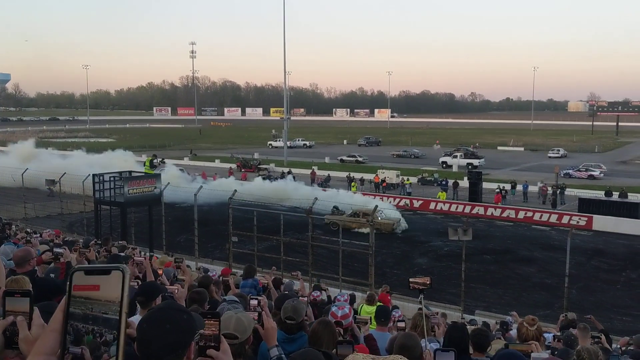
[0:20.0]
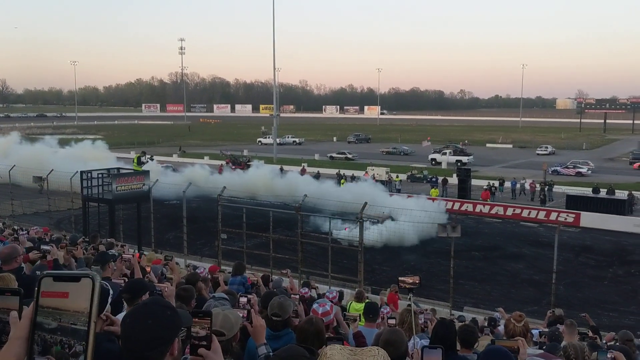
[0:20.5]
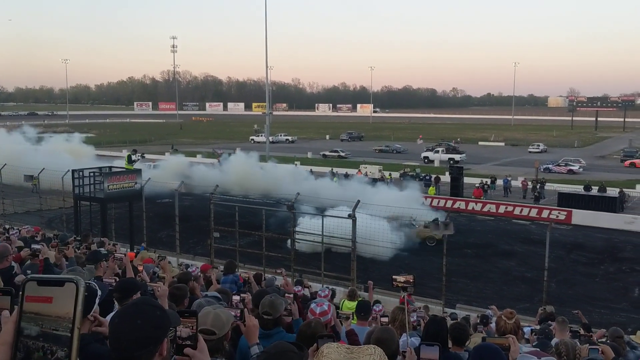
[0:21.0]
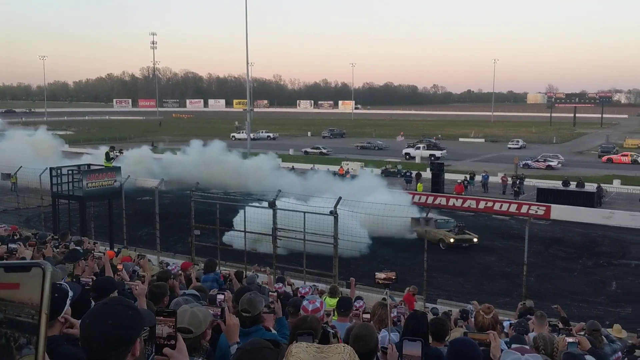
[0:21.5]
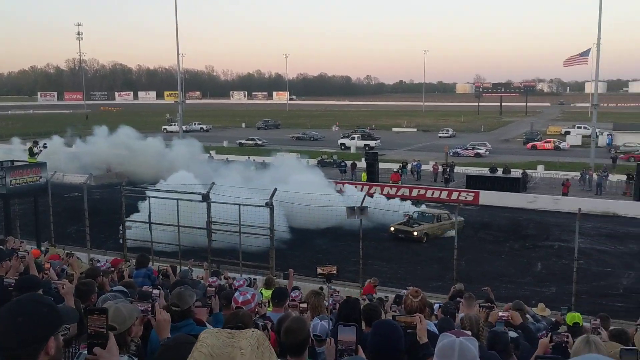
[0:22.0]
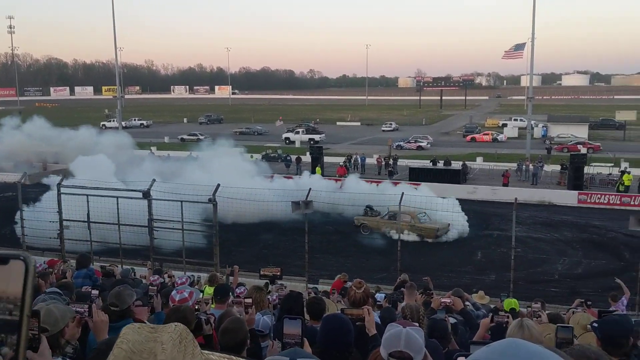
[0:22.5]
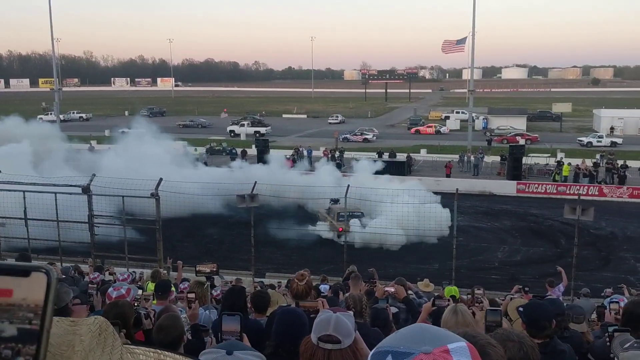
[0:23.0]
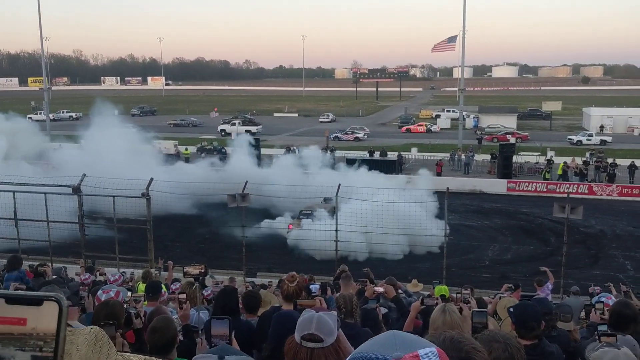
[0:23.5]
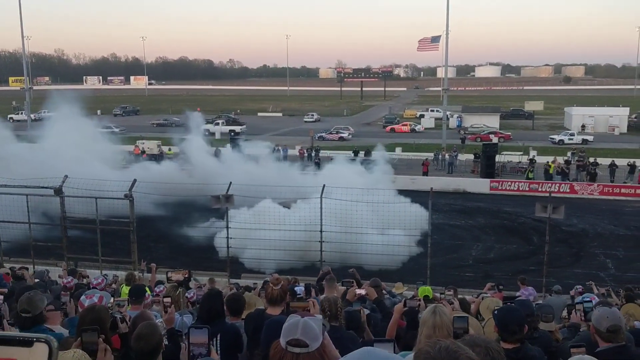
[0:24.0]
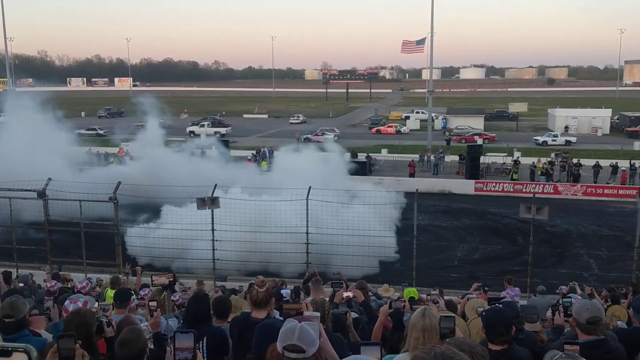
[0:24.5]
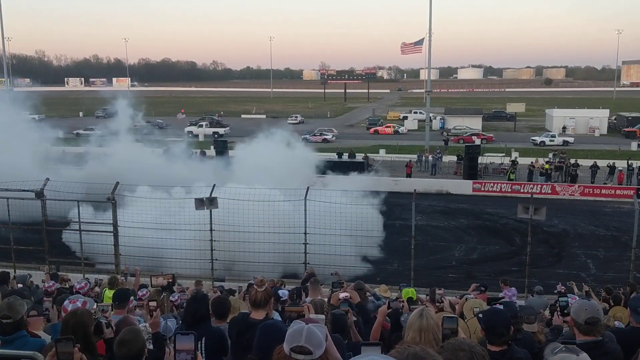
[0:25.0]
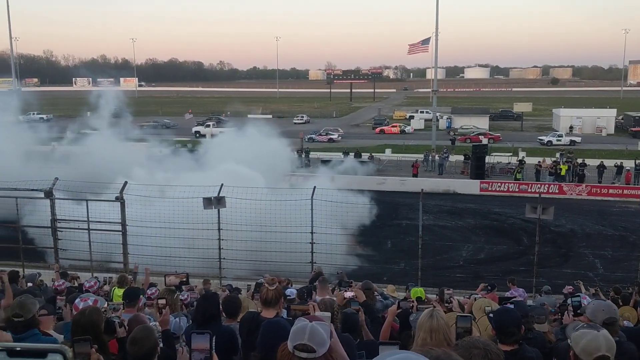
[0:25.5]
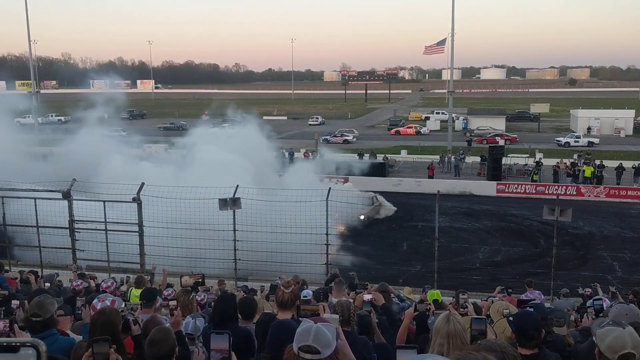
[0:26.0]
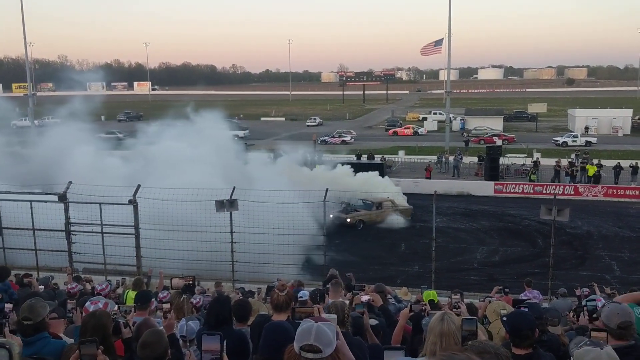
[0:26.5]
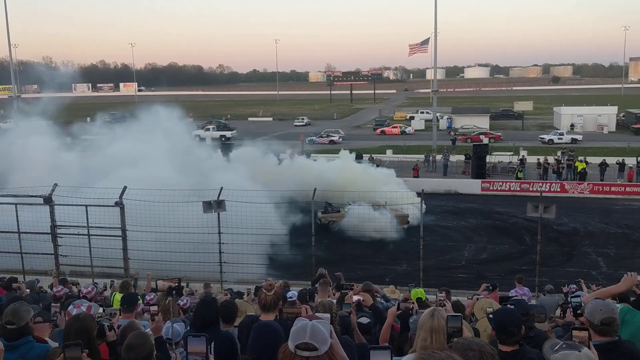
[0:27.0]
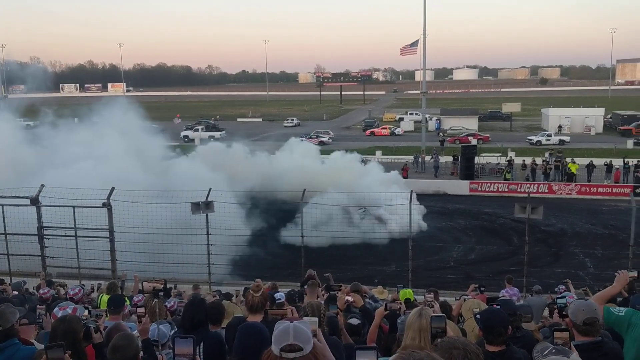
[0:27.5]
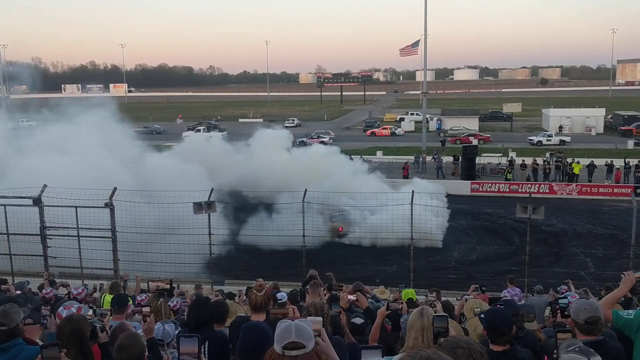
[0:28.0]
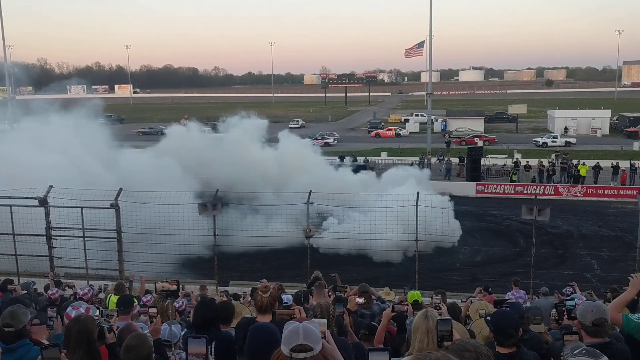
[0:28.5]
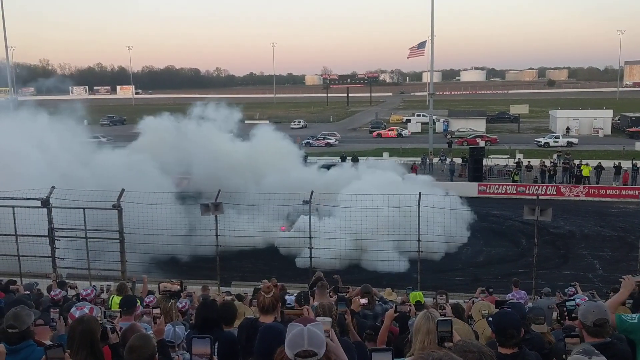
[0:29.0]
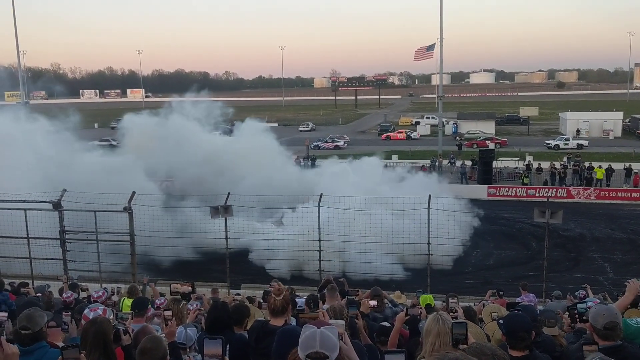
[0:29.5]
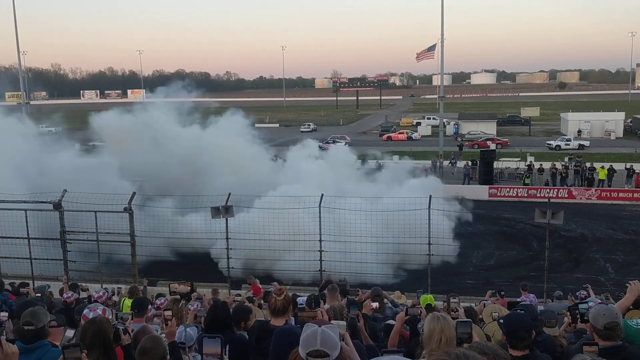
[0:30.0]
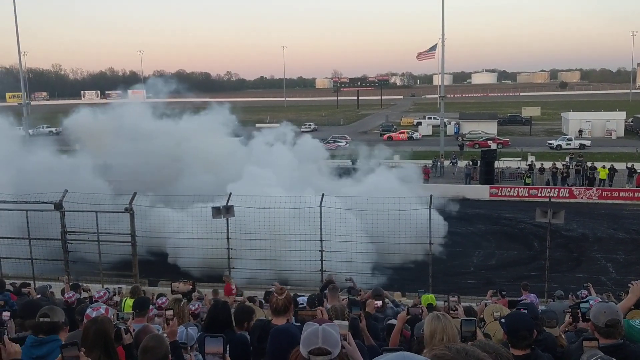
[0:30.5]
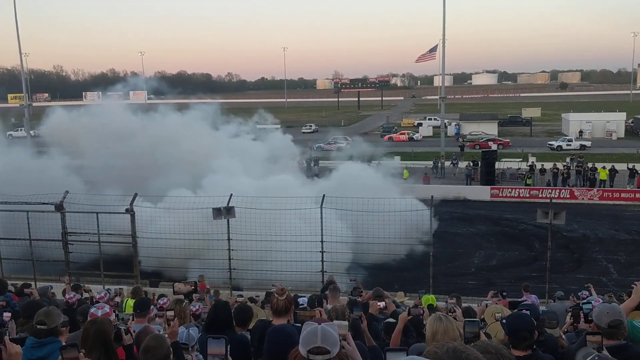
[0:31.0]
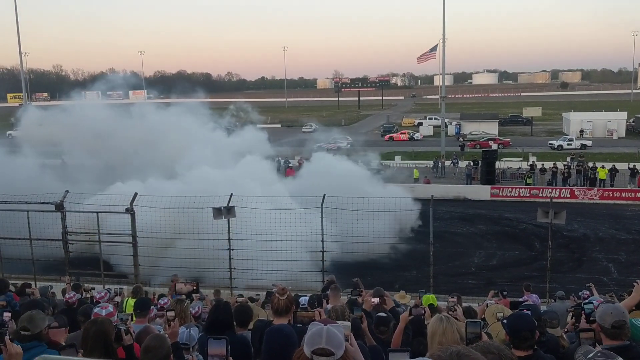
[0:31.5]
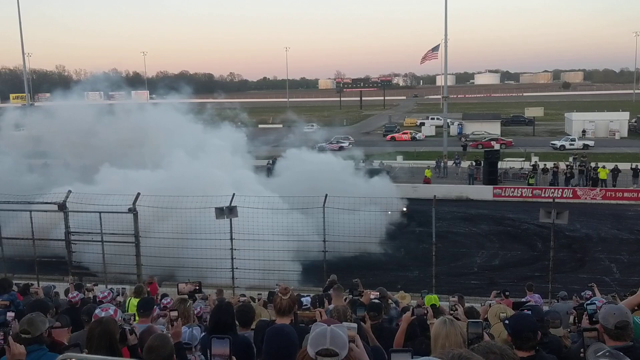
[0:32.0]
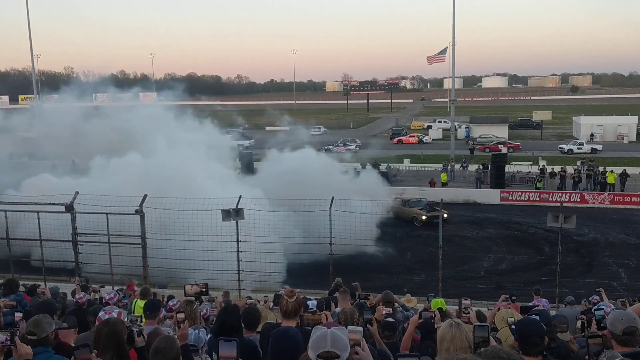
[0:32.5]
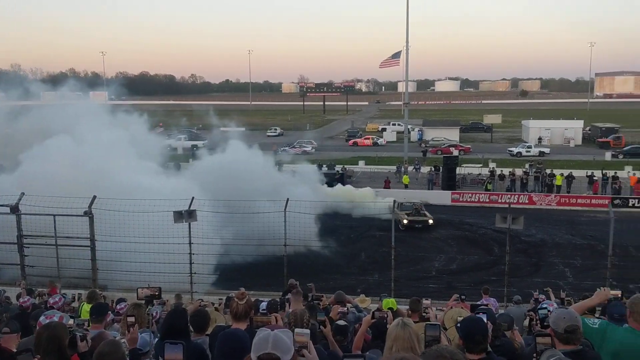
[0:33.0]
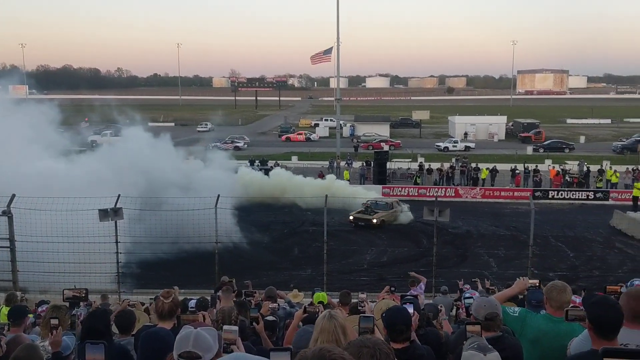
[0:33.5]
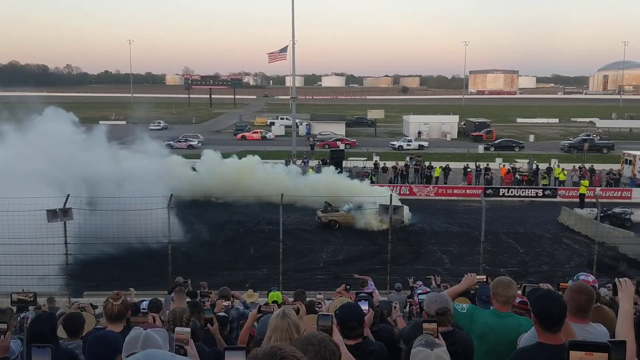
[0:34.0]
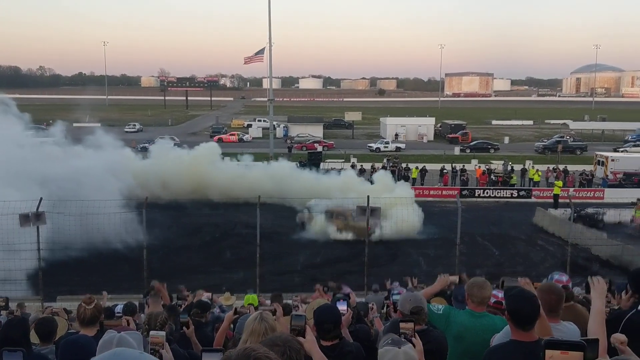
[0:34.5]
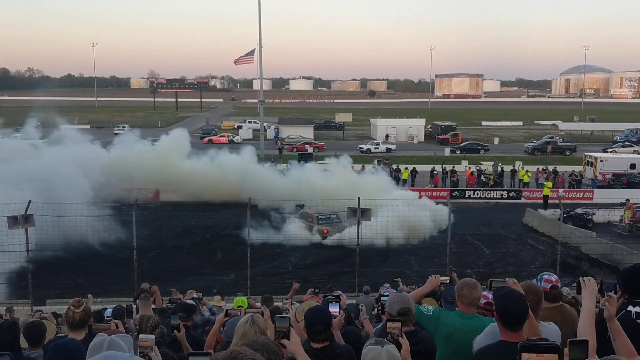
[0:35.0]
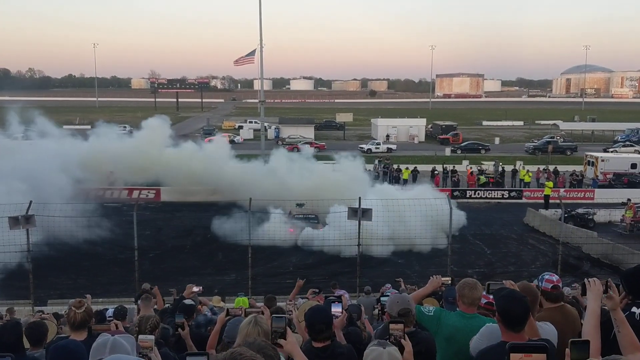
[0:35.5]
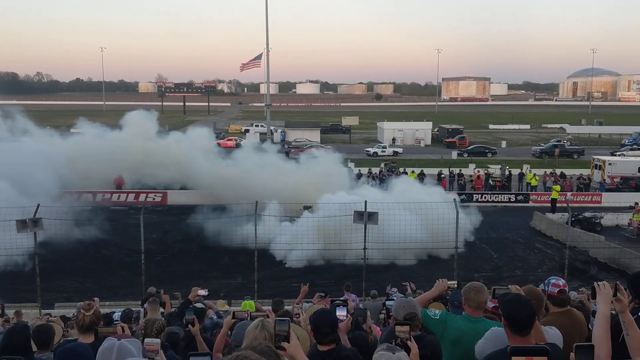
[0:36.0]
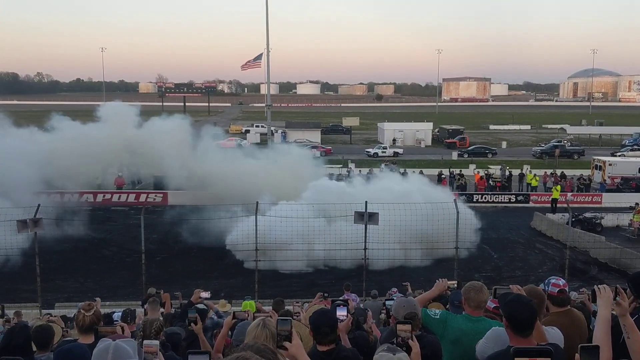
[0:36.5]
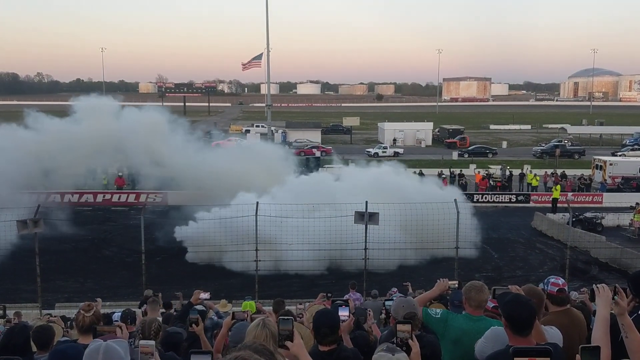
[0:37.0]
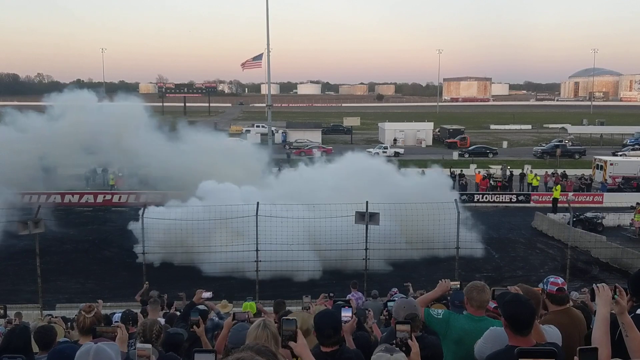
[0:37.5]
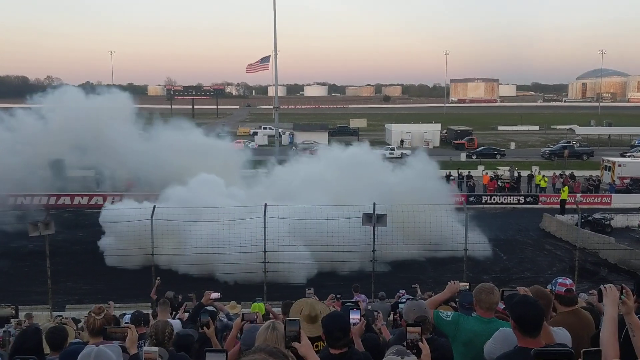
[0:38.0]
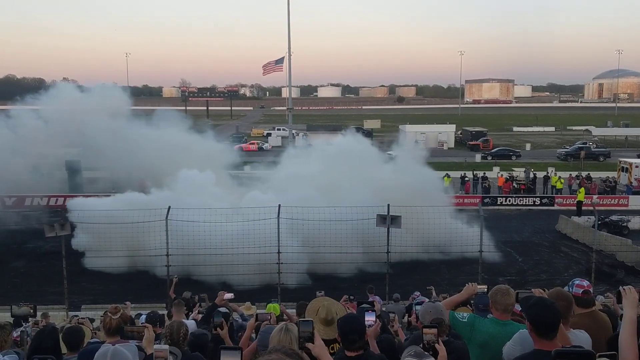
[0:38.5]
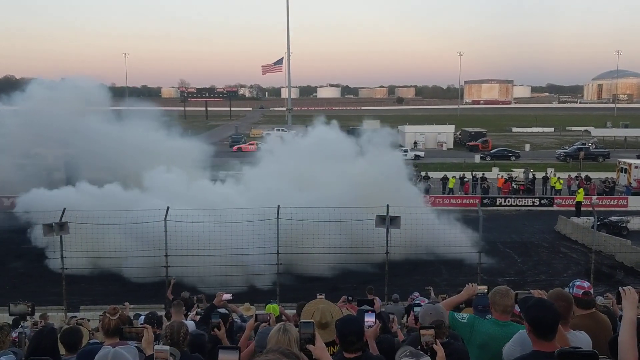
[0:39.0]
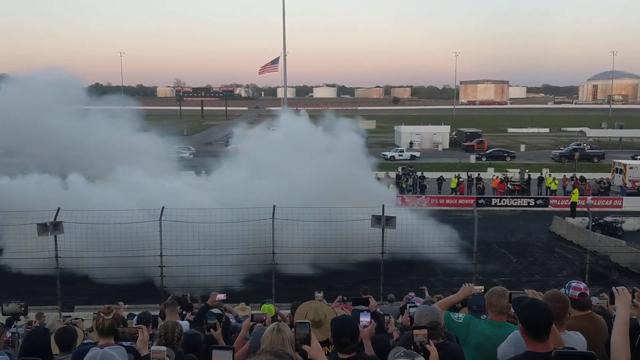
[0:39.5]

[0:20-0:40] A yellow car spins clockwise on the race circuit while a significant amount of smoke comes out of its exhaust, seeming to cover hundreds of metres in length. Around the circuit are a number of fans, perhaps hundreds or even thousands, watching the events on the course. It seems to be evening, close to sunset, and there are no clouds in the sky. The car keeps spinning clockwise for a number of cycles, to the point that the smoke from the exhaust covers the entire car. After a few more spins the car seems to slow down and then accelerates again while going round in circles. It appears to be some sort of exhibition event.